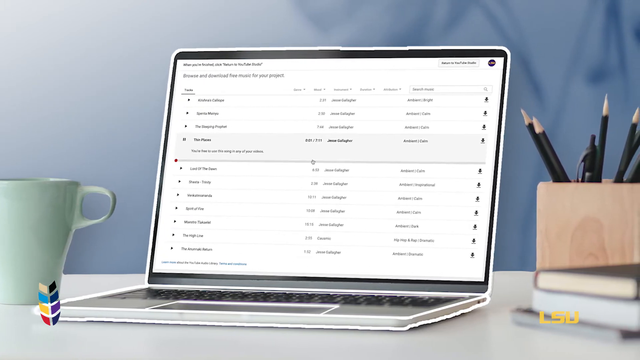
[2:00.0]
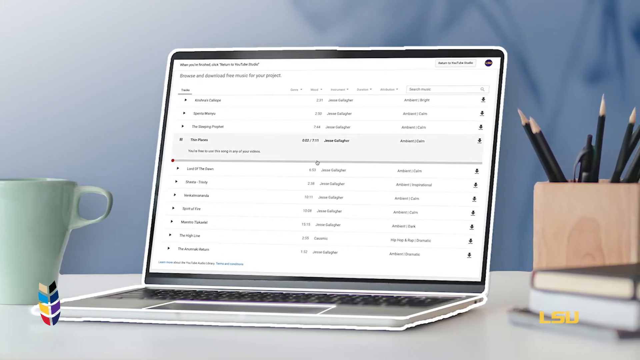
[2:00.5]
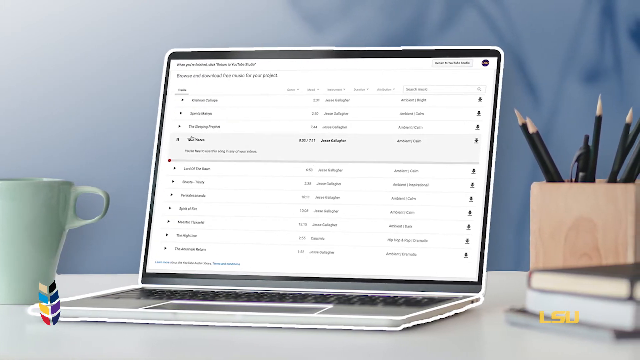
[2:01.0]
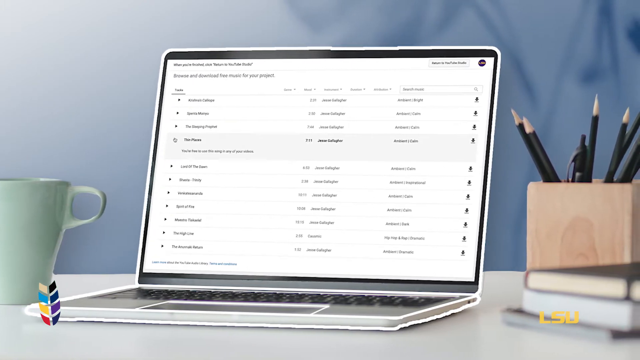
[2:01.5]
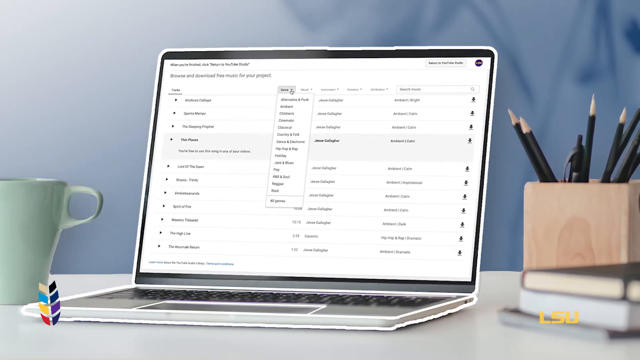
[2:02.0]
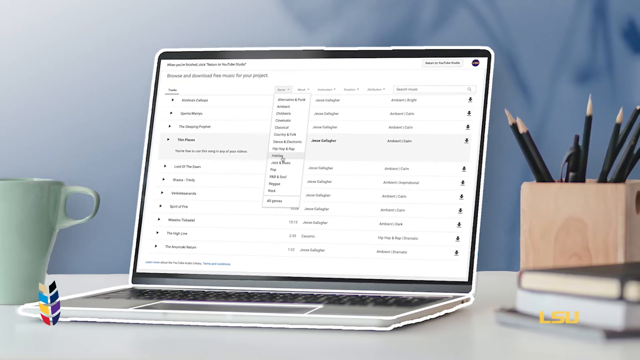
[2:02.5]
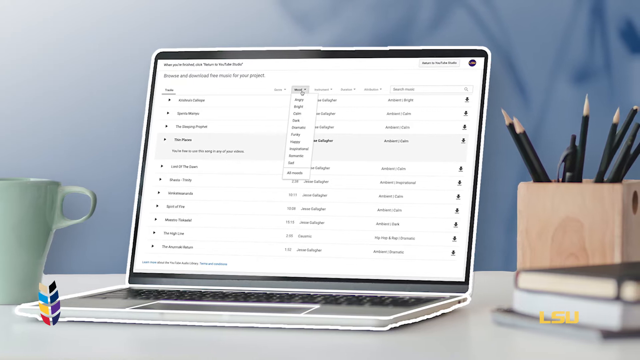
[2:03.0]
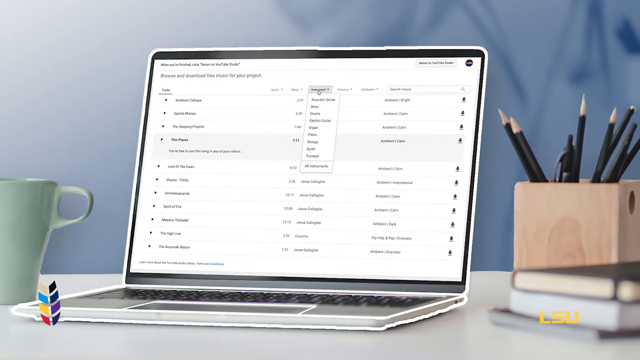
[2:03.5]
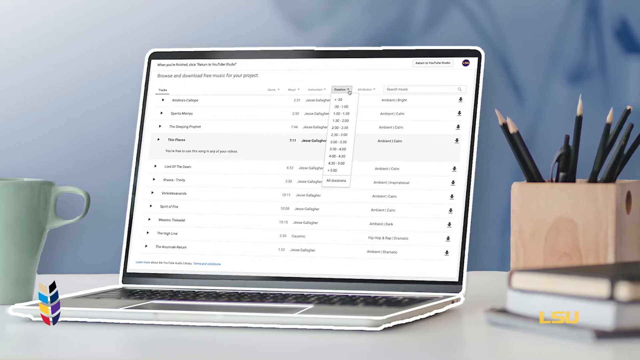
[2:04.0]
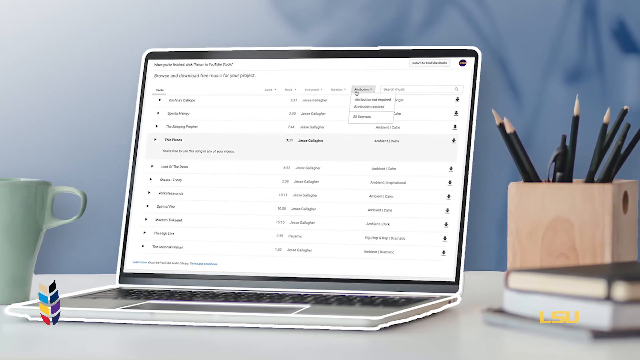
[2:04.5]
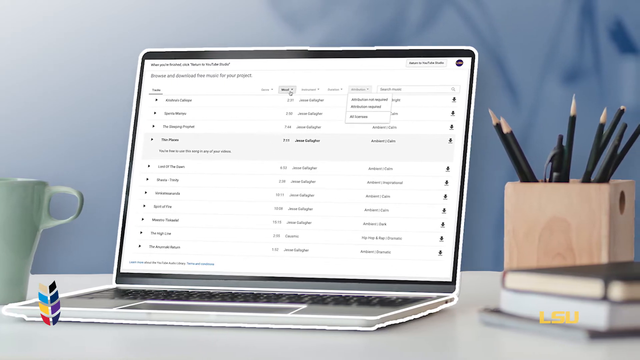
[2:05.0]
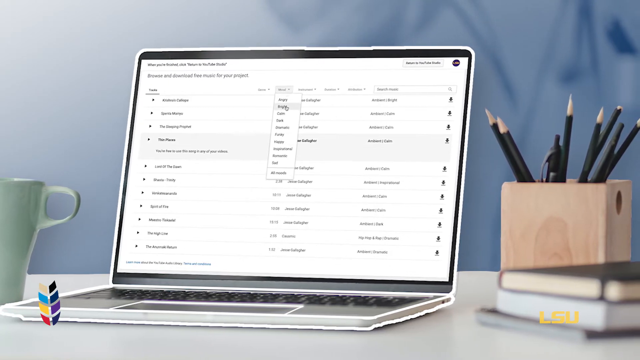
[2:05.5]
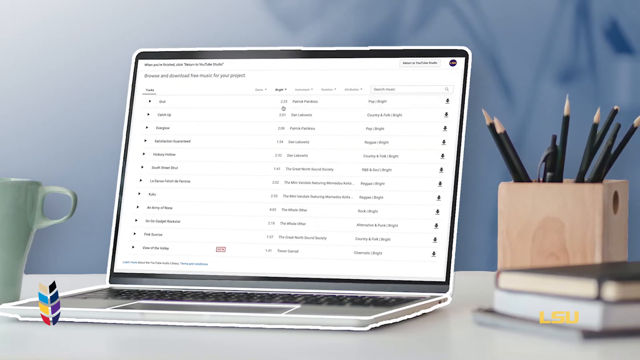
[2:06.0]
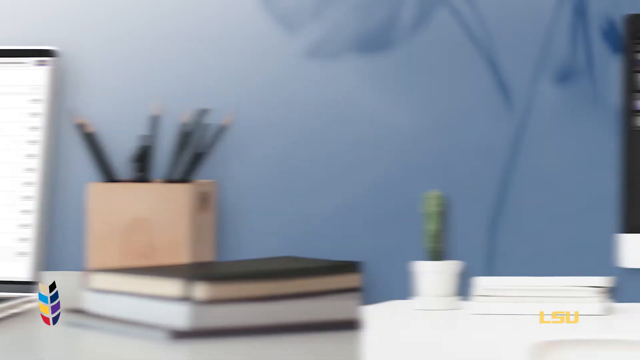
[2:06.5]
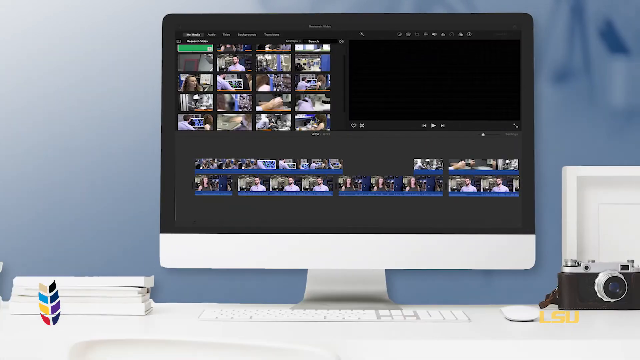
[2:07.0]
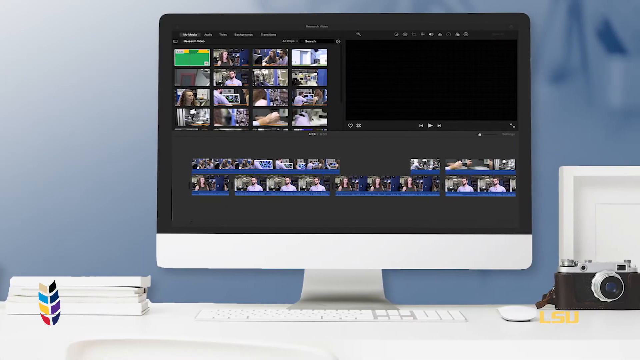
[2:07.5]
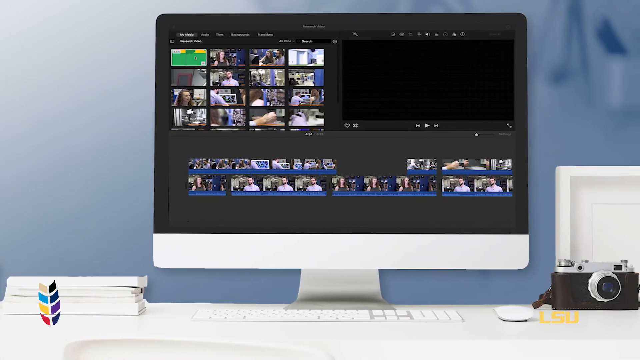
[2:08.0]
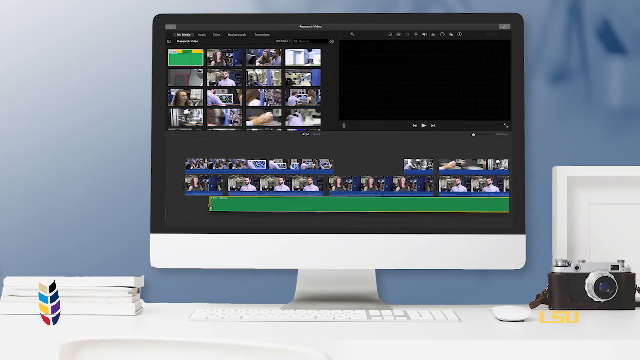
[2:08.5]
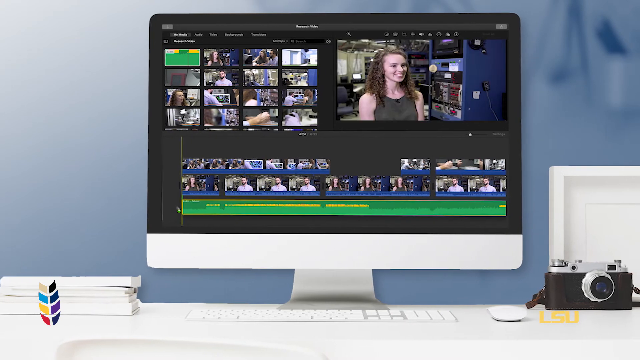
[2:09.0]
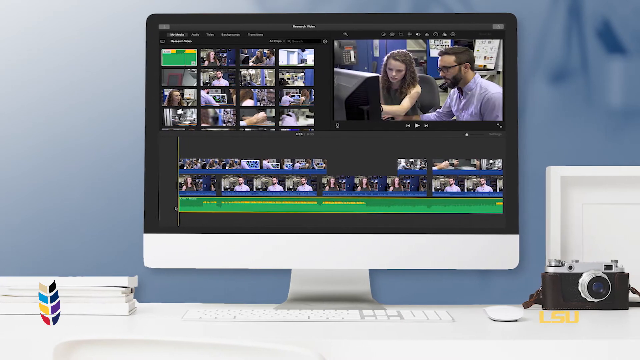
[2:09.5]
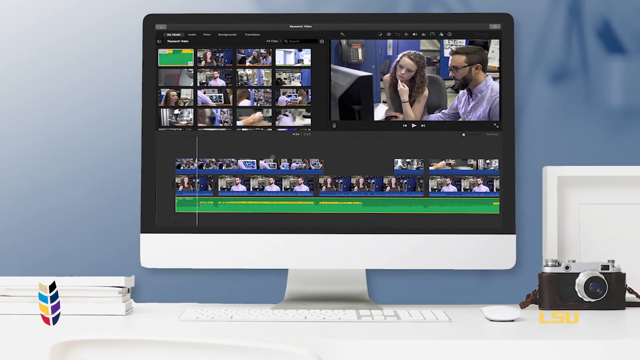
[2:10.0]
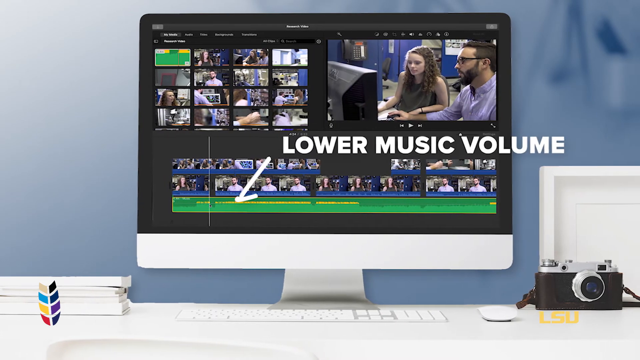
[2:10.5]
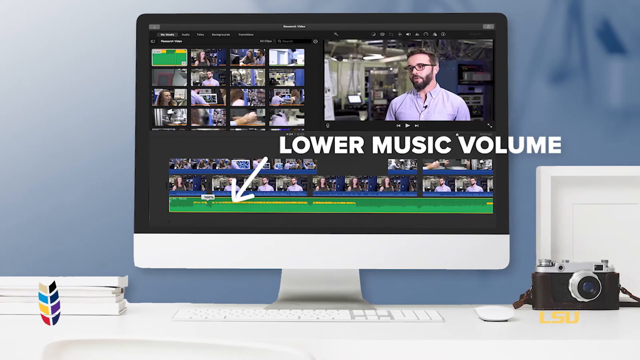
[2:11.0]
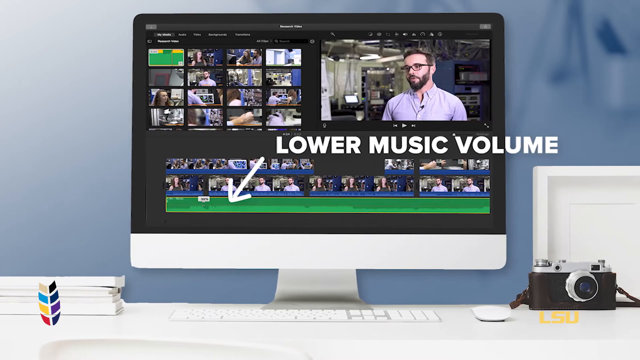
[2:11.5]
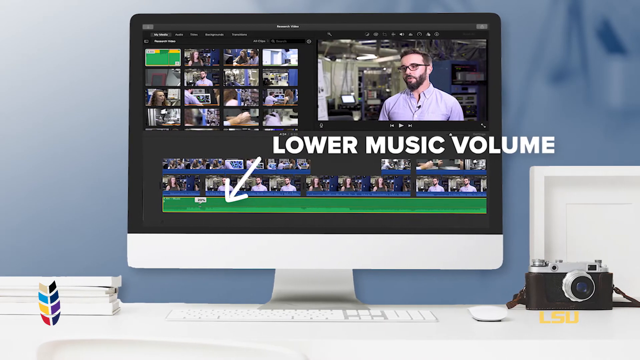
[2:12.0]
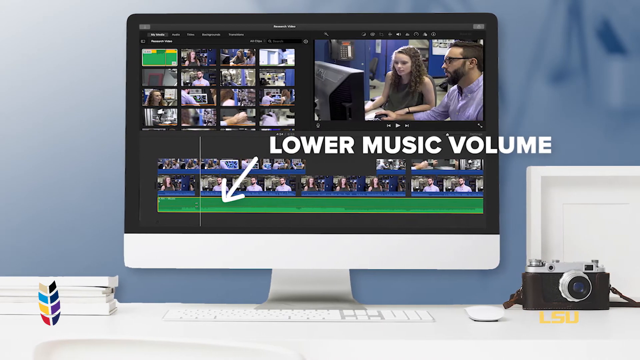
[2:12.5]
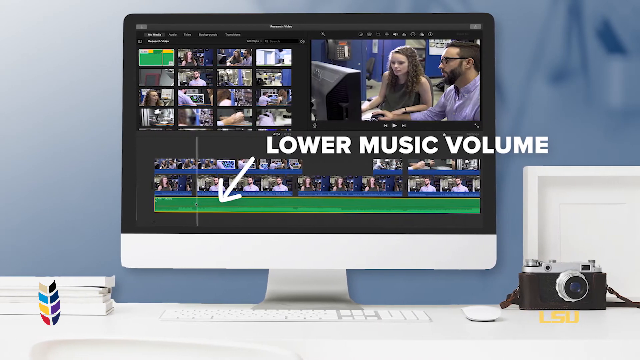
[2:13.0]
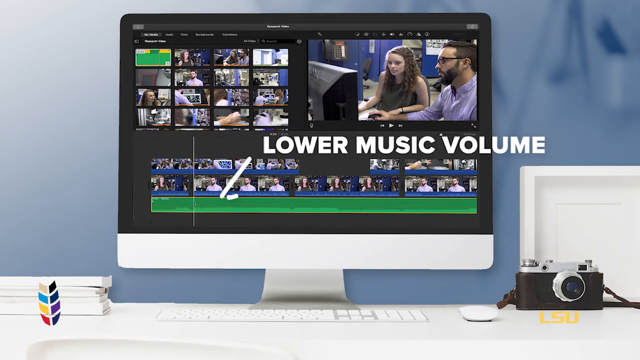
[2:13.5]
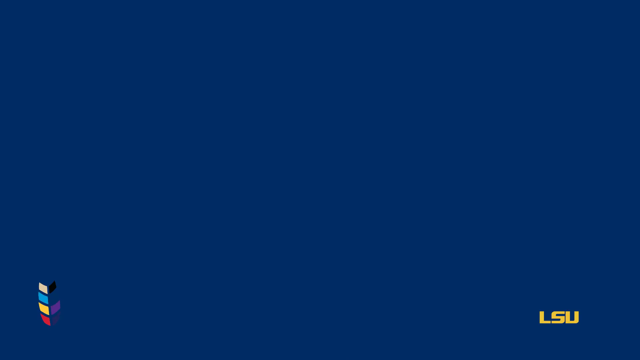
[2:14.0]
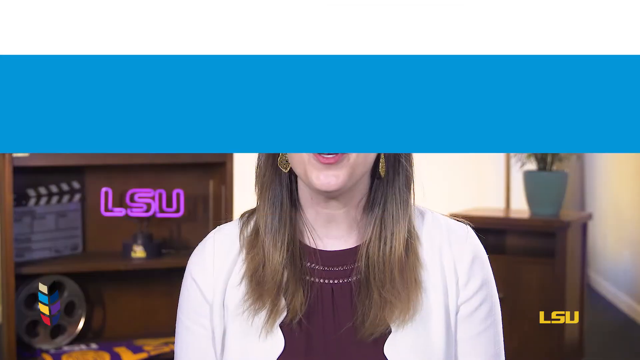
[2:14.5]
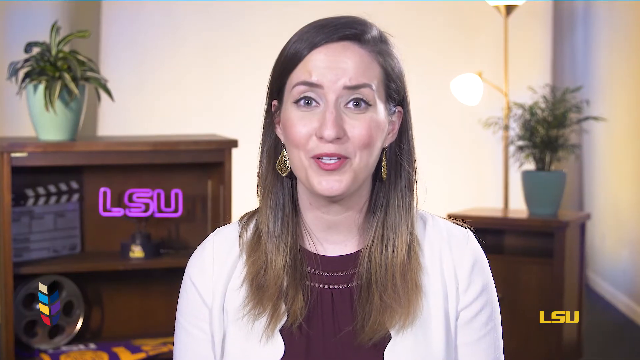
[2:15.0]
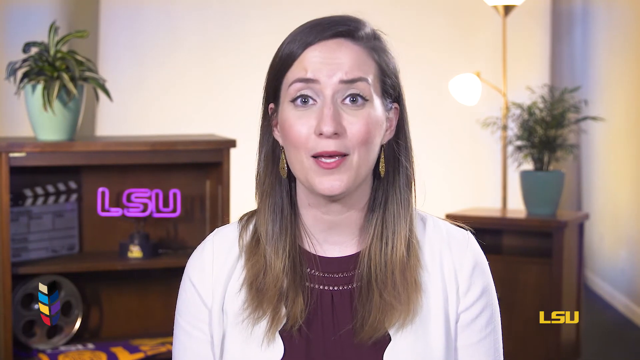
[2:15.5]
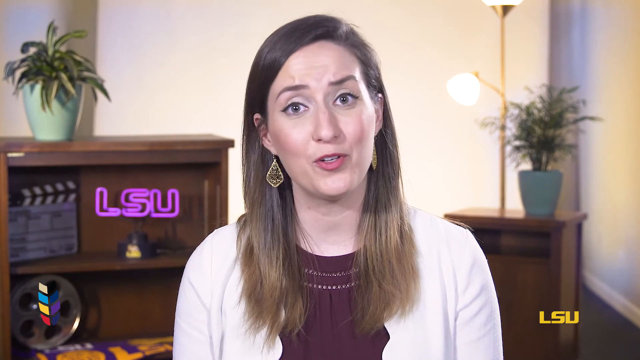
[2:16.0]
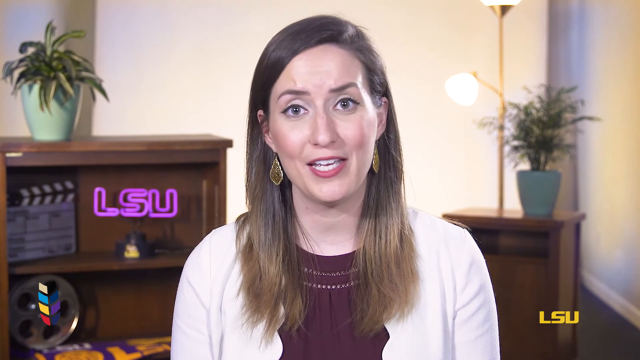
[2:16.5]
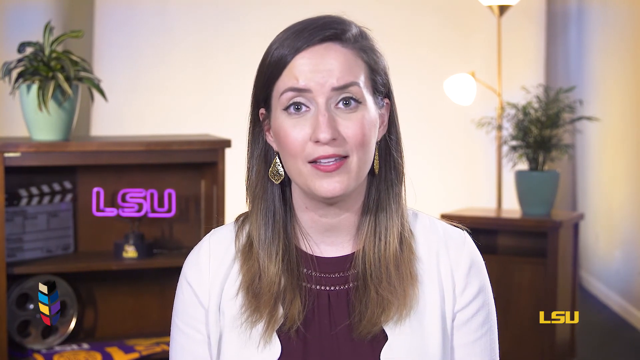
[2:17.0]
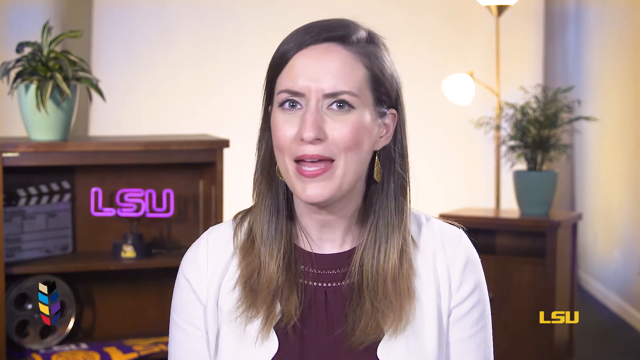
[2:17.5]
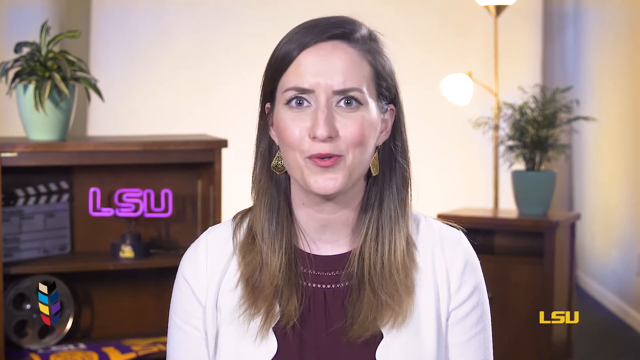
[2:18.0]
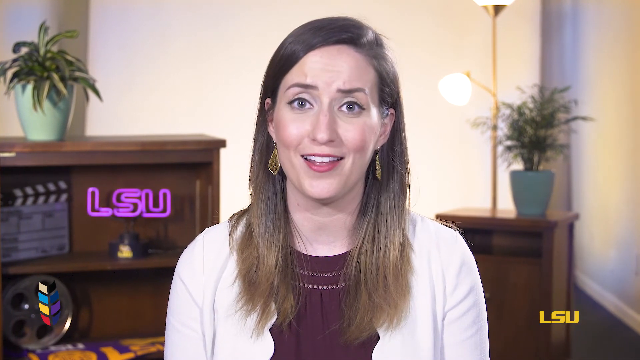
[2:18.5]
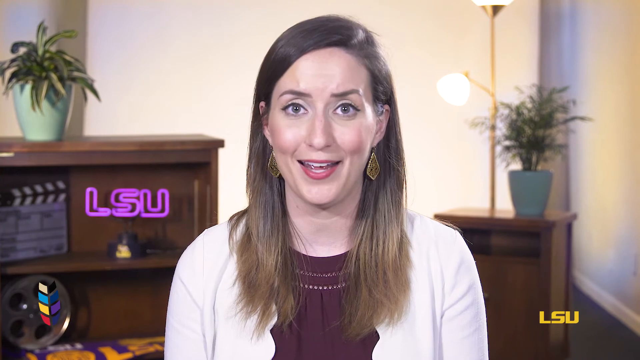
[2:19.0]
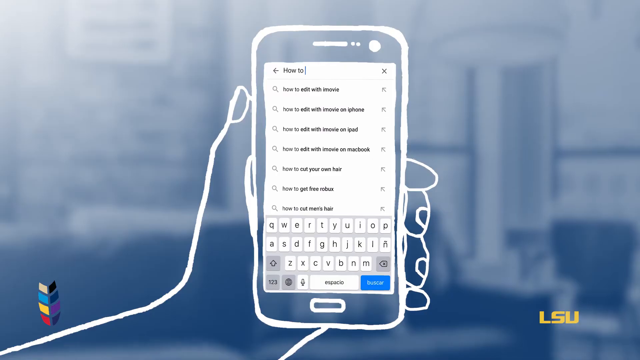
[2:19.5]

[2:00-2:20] A laptop screen scrolls through a list of something, and the image slides over to a computer monitor showing video editing software that seems to give some type of instructions; it says "lower music volume" with an arrow pointing to a control. The video cuts to the narrator, a white woman with long brown hair, blue eyes and gold earrings, wearing a white cardigan and burgundy blouse. Behind her are a little bookcase and a very small bookcase, each with a potted plant on top. Last, a drawing of a hand holds a cell phone whose screen scrolls through different screens.